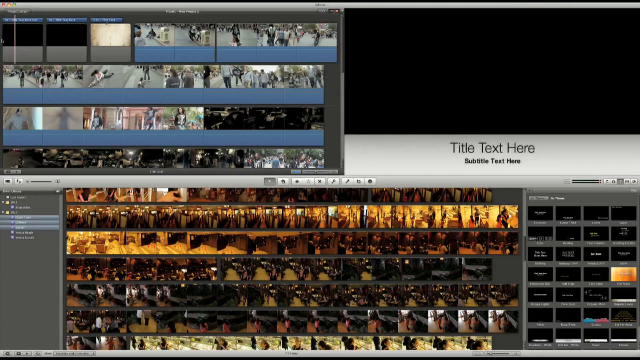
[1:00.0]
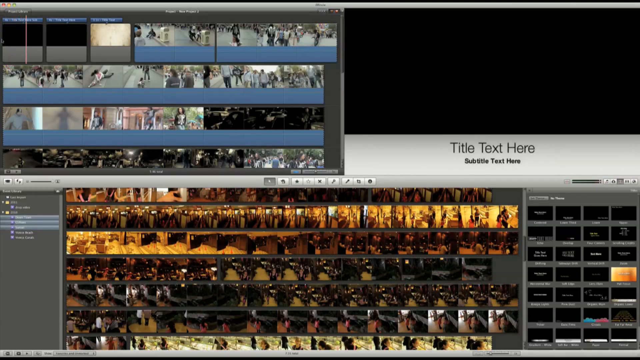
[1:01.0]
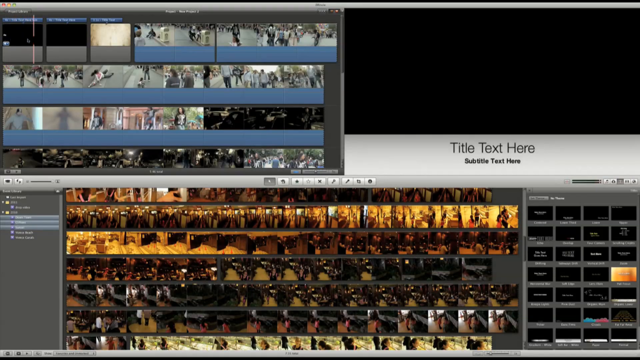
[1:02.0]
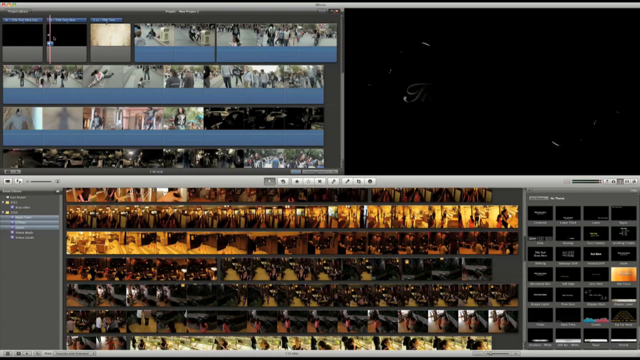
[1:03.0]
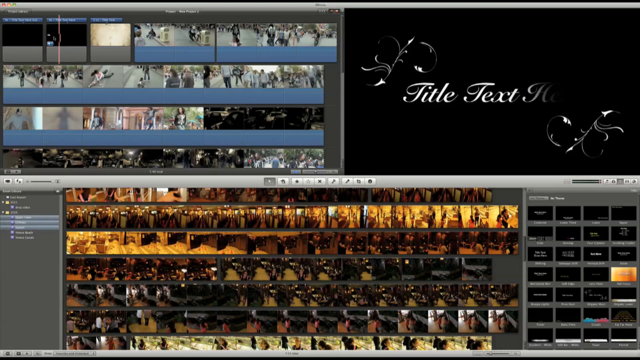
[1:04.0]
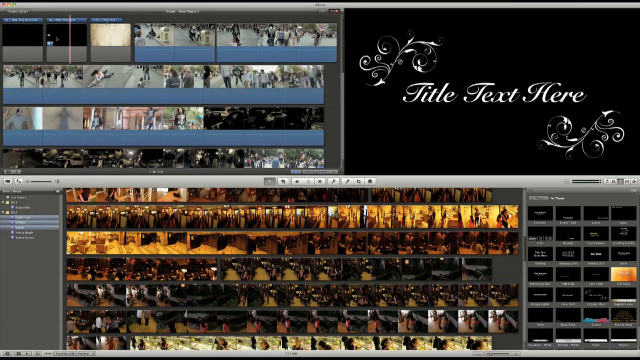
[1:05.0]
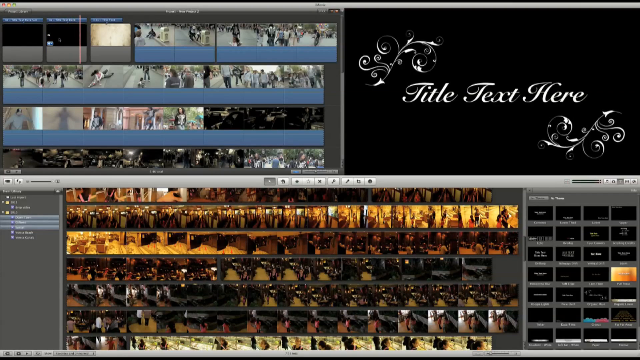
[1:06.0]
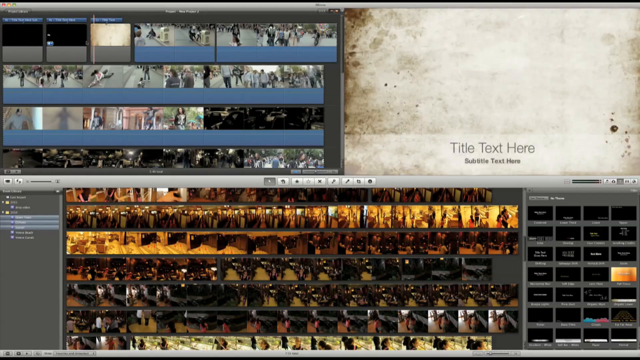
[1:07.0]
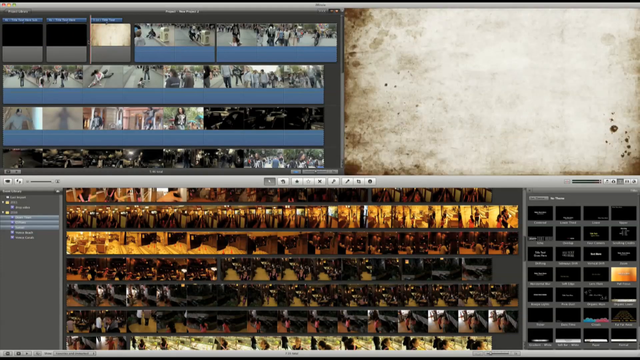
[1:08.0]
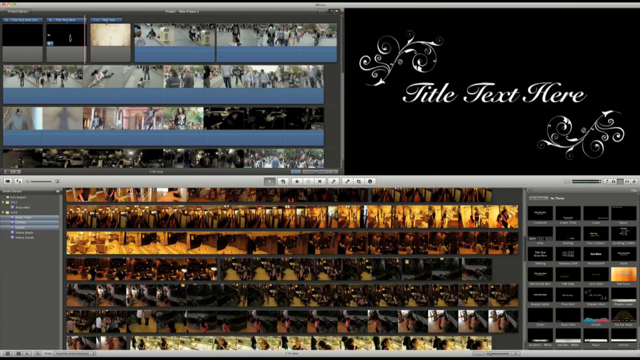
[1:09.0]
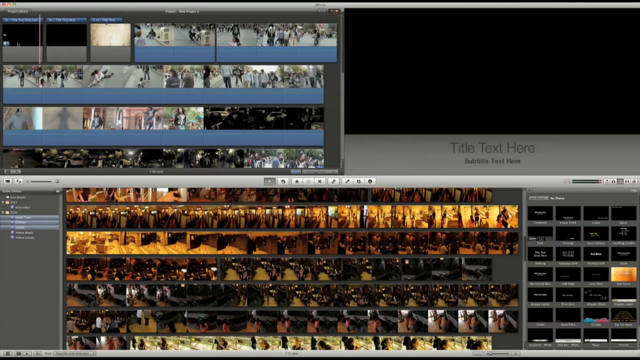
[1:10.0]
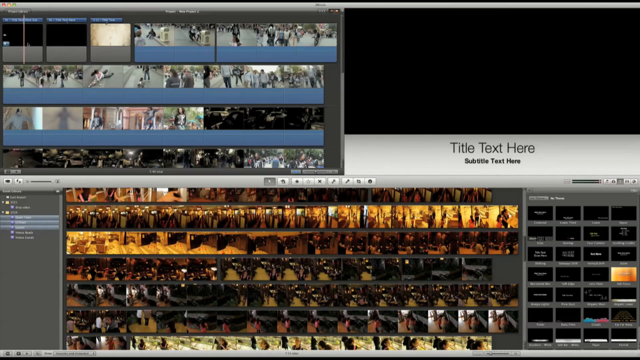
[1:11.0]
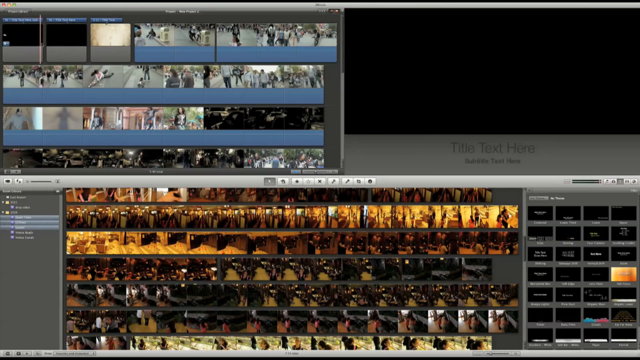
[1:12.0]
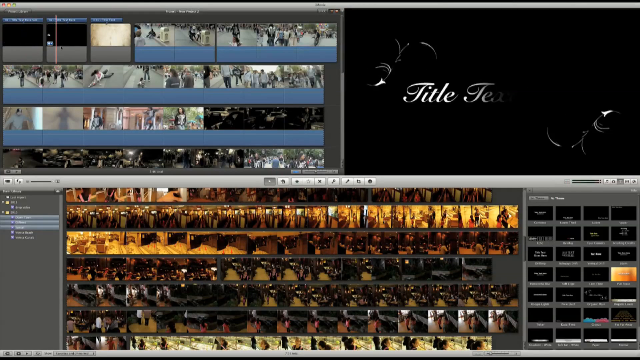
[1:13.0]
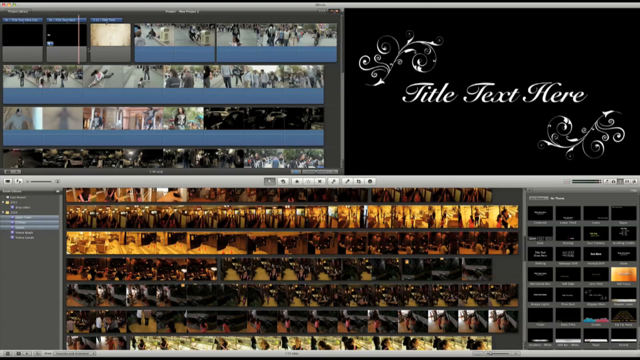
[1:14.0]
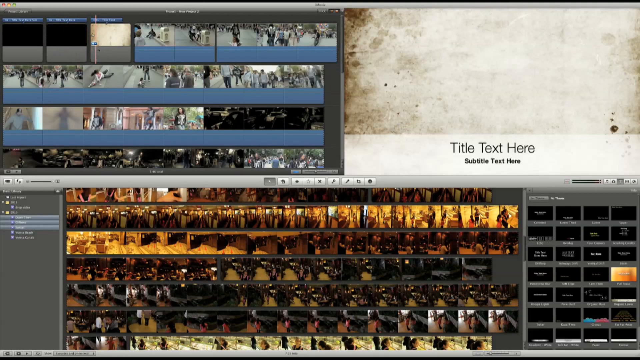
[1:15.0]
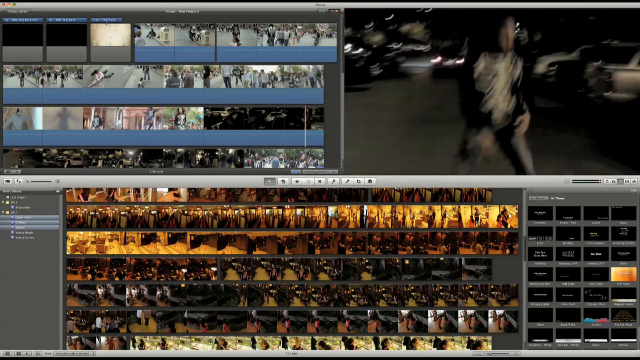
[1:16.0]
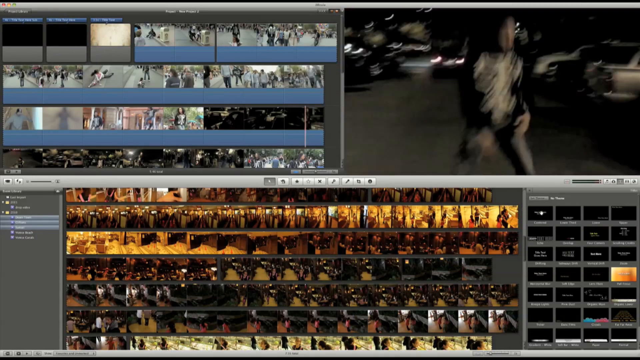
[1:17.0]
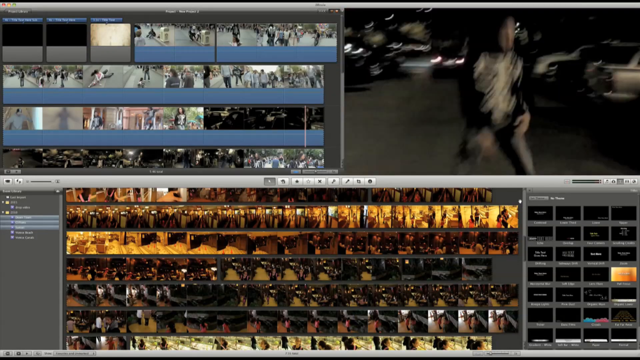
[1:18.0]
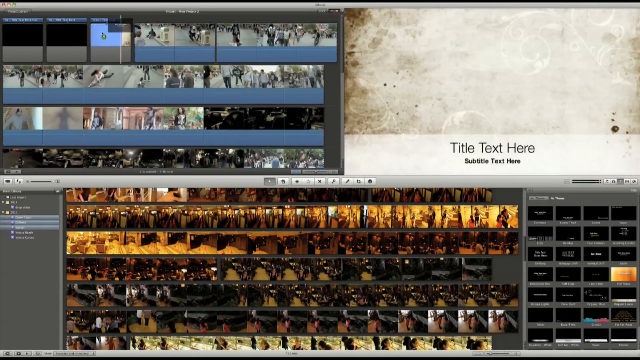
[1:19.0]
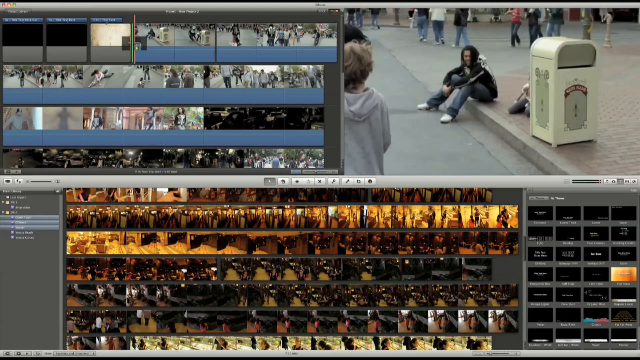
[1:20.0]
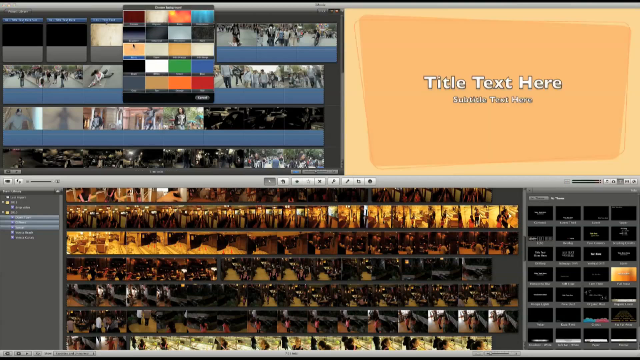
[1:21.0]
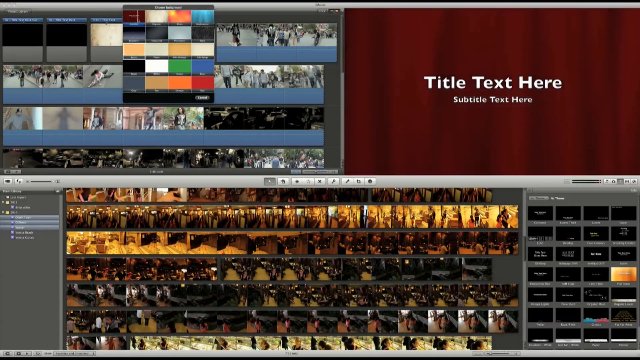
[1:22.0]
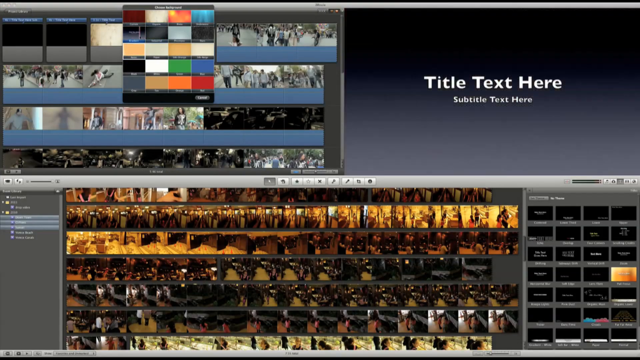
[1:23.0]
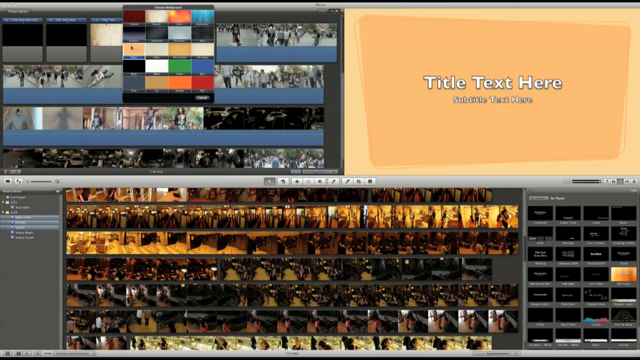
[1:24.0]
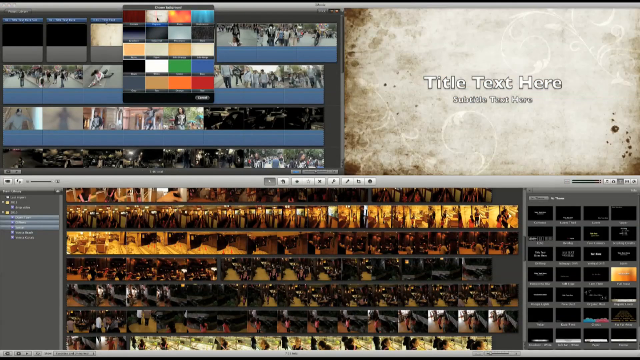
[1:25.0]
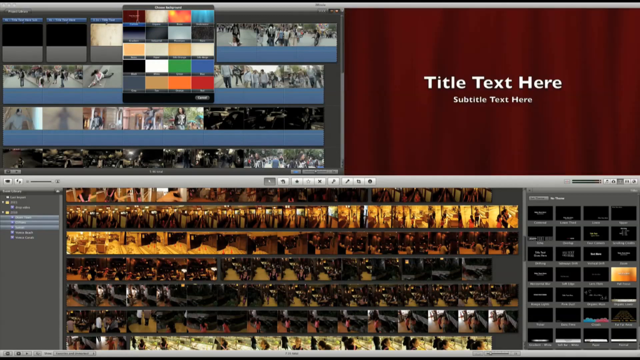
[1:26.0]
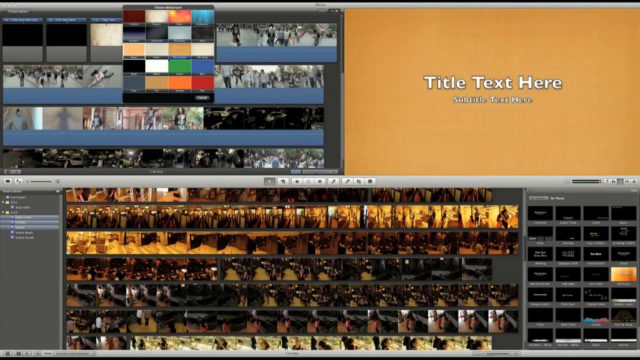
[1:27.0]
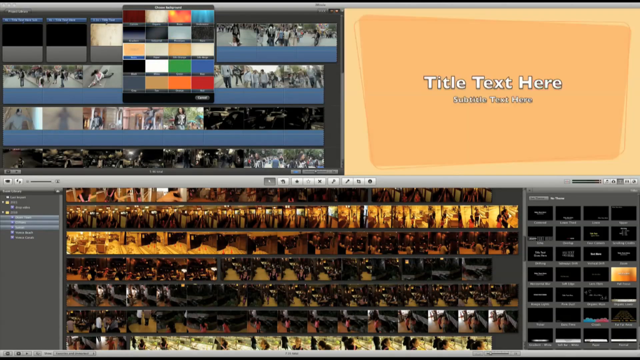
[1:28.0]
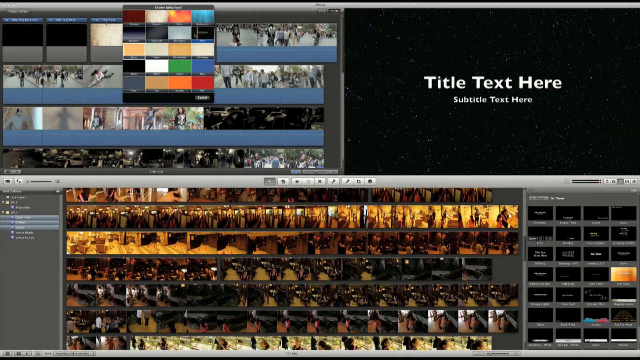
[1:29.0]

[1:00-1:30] The first two scenes visible at the top left form the introduction of the video and read "enter title here", for entering the introductory title, with subtitles as well. The background of the introduction can be changed, with options varying across colours, collections and themes. The third slide shows a sub-introduction where the background theme can be changed. Buttons such as undo, home, play and stop are between the videos. As Ken scrolls through the backgrounds, options appear including a black background, a sky background with stars, and solid colours such as black, brown and red.